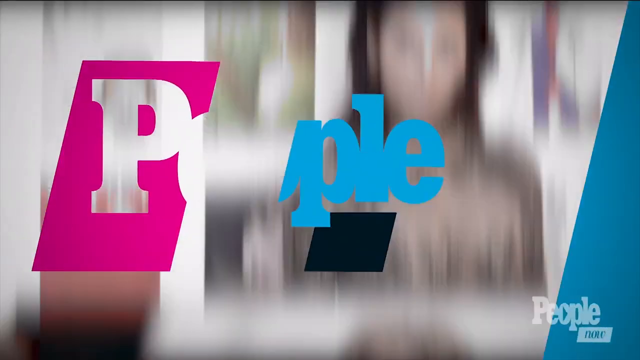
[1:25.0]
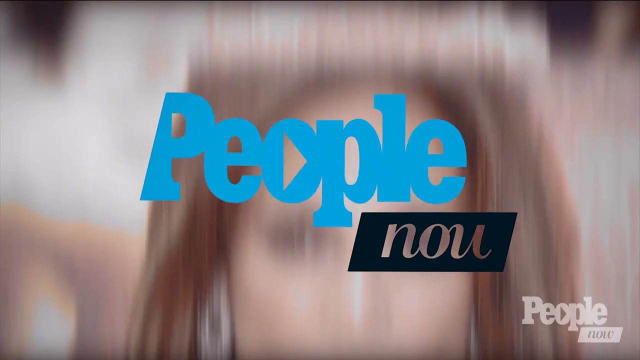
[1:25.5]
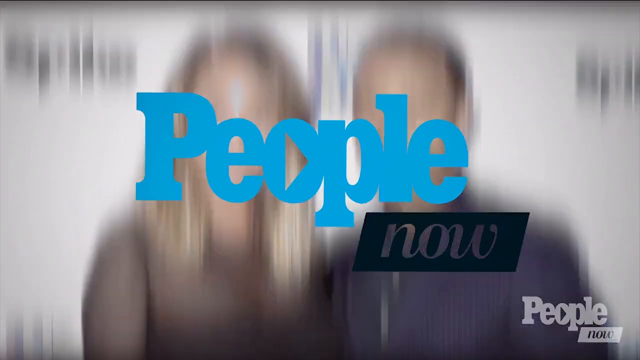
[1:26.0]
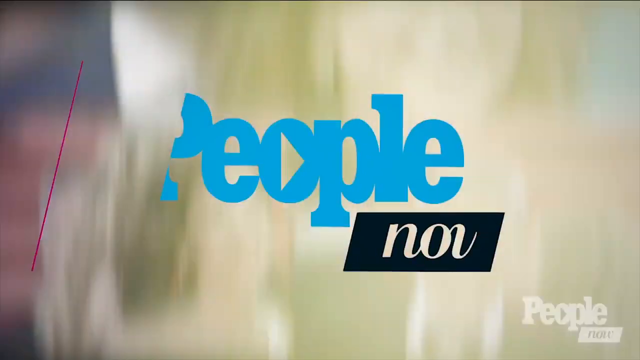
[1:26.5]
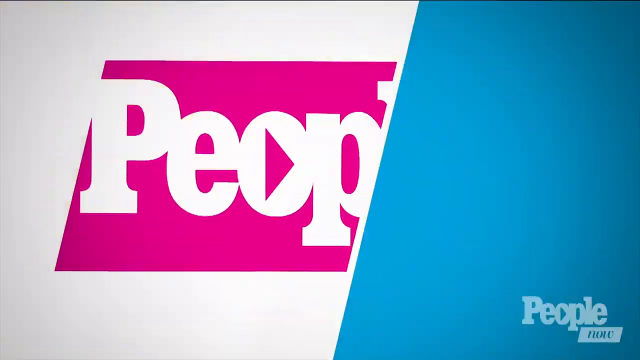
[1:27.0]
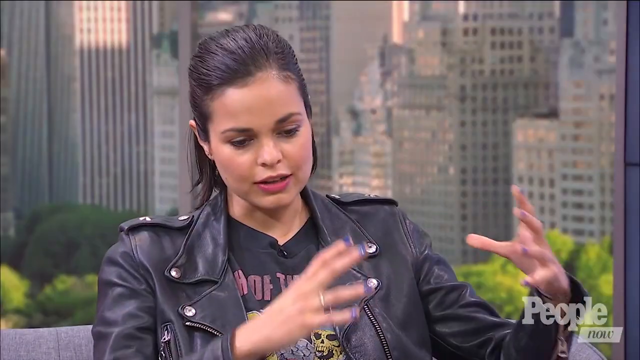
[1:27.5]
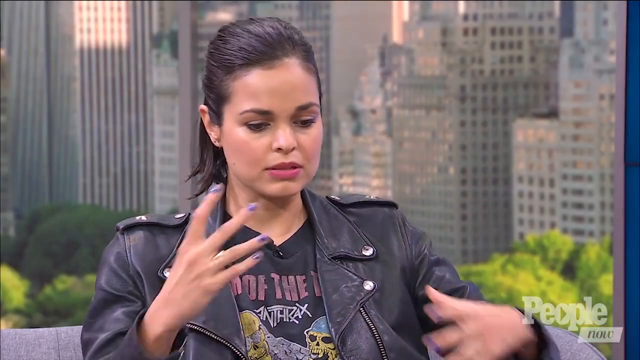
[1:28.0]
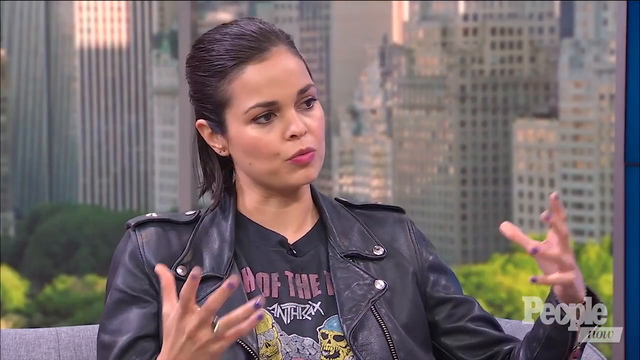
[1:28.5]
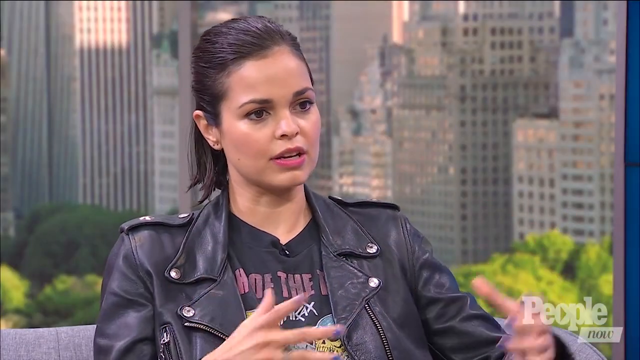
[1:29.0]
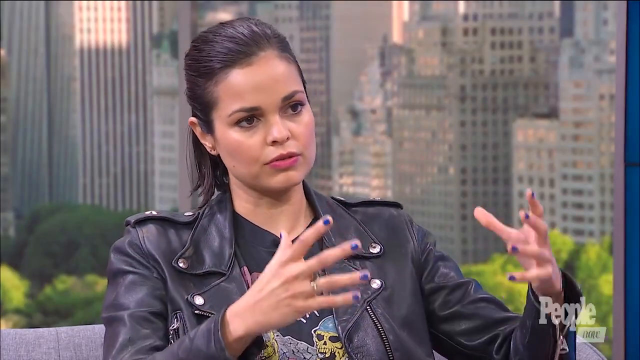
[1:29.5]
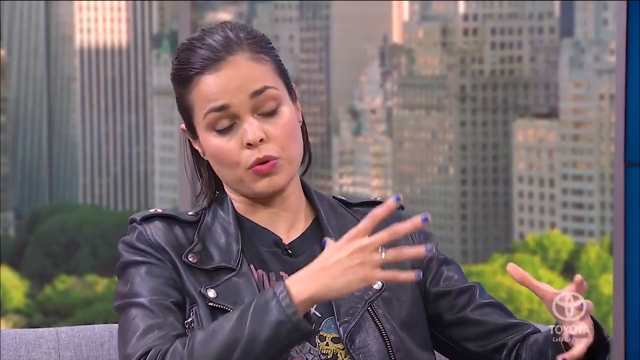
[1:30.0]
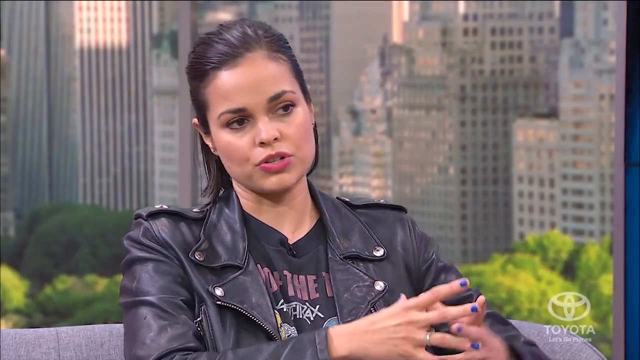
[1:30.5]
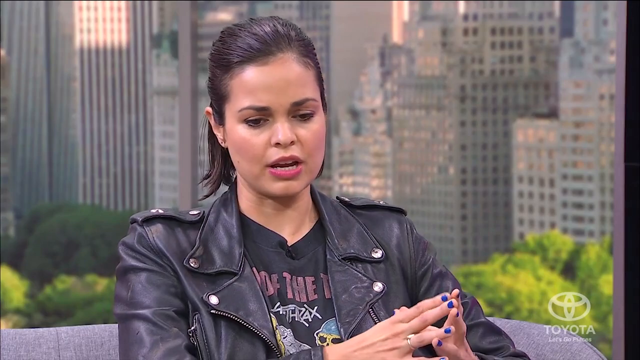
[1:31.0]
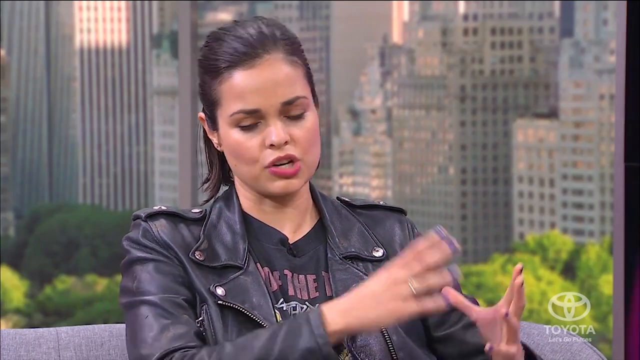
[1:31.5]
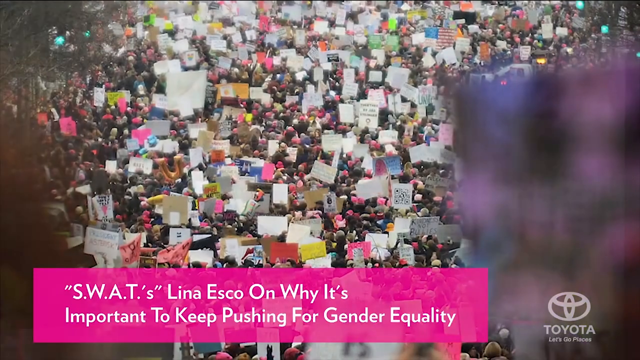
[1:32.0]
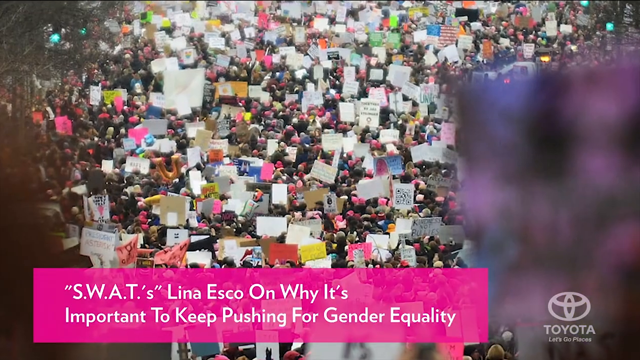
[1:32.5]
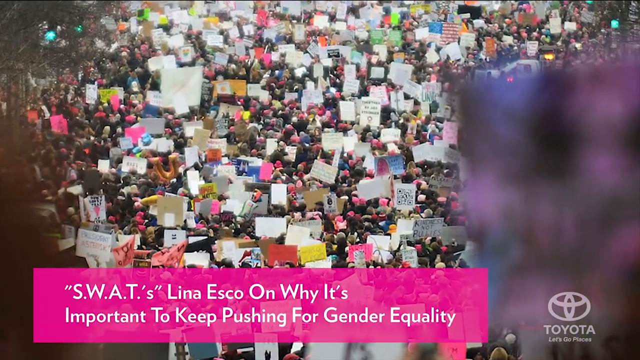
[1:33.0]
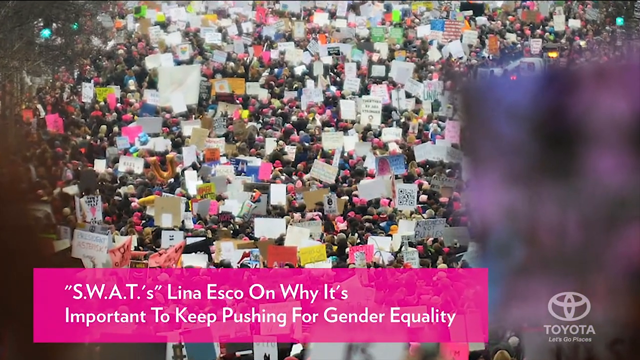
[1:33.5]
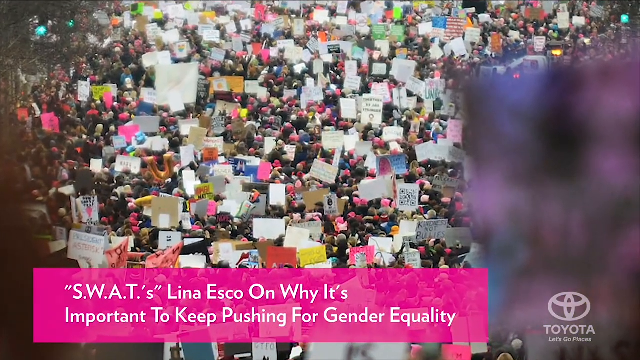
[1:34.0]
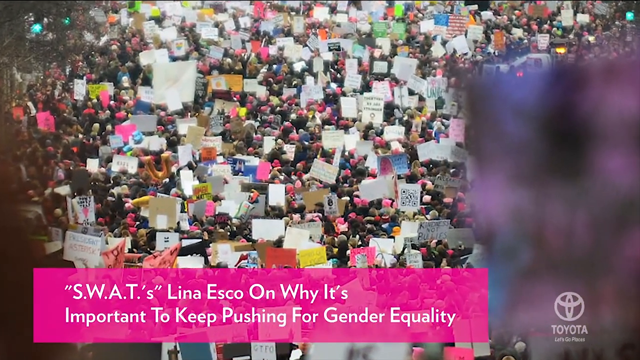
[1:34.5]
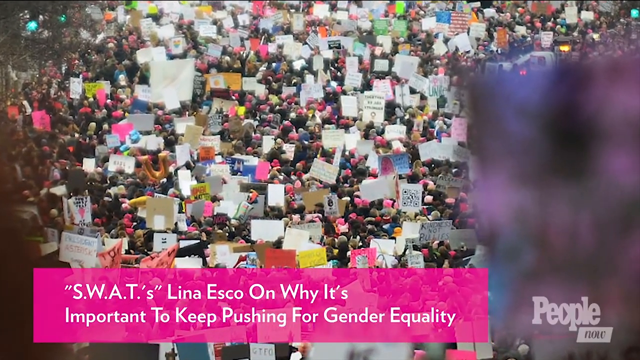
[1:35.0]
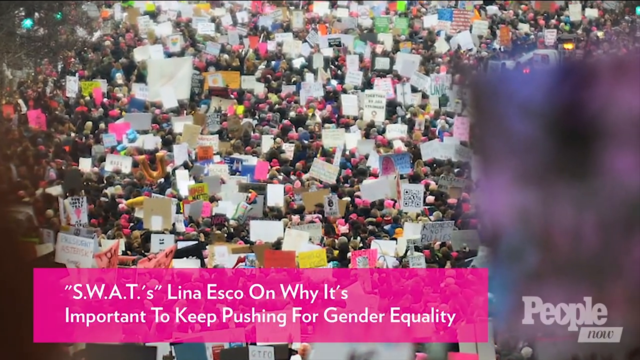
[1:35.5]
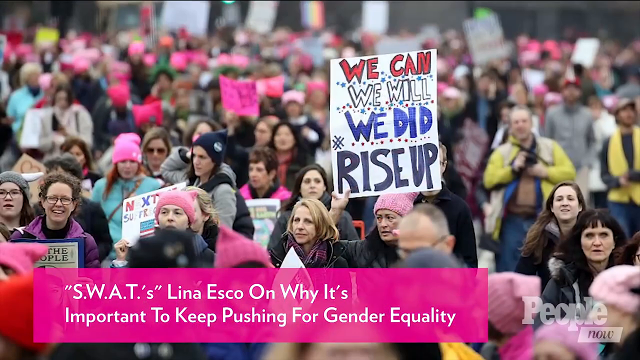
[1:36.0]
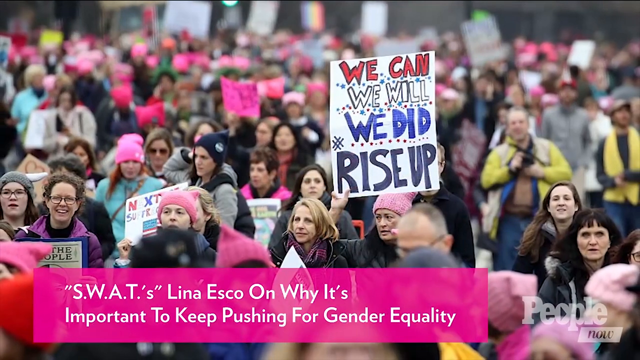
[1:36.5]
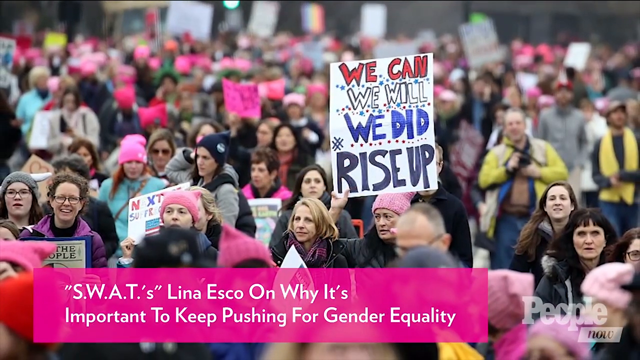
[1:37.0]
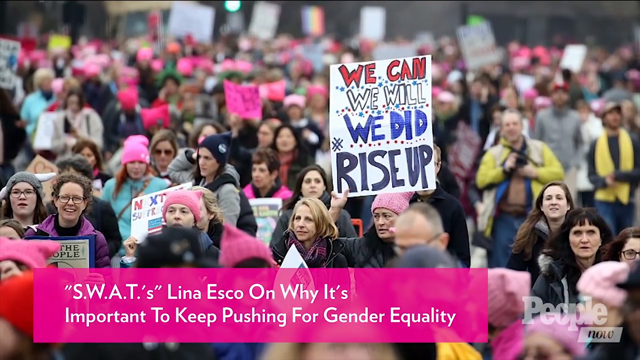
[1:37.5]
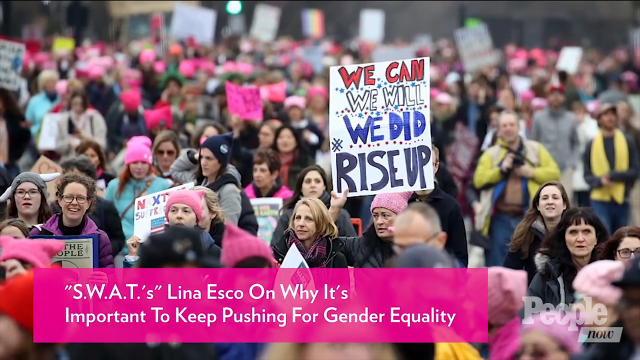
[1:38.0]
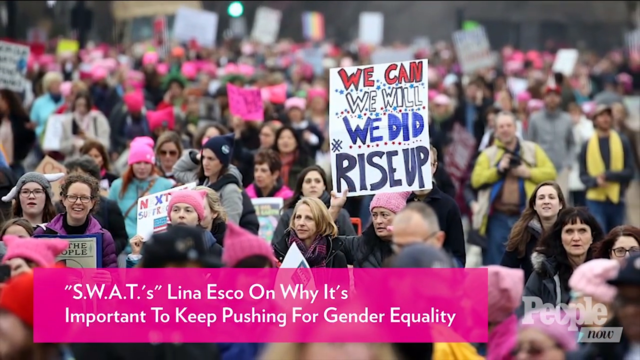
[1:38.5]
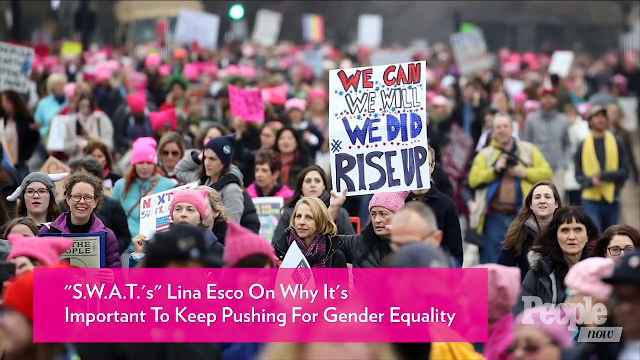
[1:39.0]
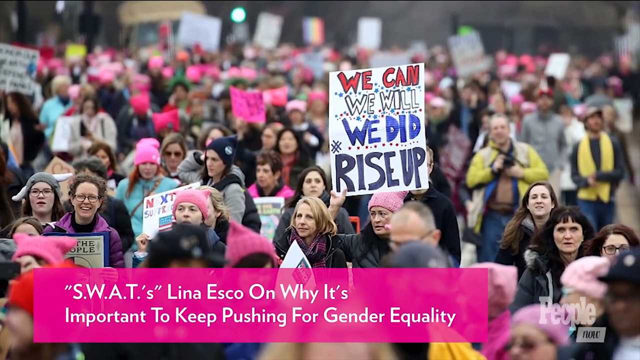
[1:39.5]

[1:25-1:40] A couple of other people are shown, and then the scene returns to the woman in the leather jacket with short black hair. Next, on-screen text reads "Swat, Lena, Esko on why it's important to keep pushing for gender equality". A crowd is shown out in the streets holding a protest, with different people carrying different banners; one banner reads "we can, we will, we did, rise up". There are women and some men in the crowd, and some people wear aprons. There are a lot of people, seemingly up to about 500.